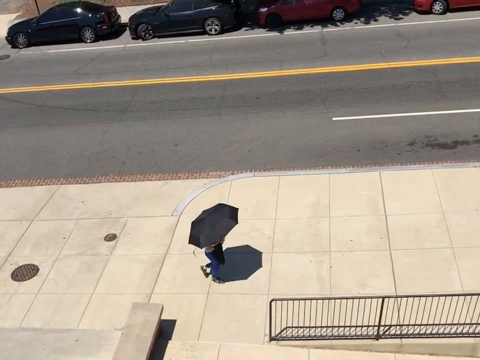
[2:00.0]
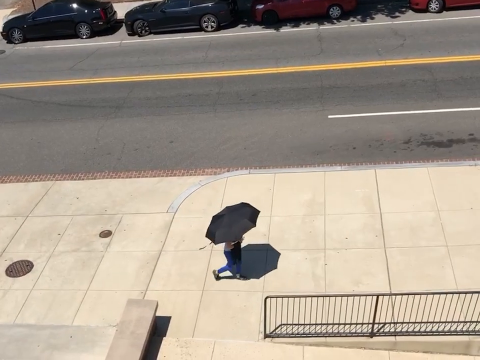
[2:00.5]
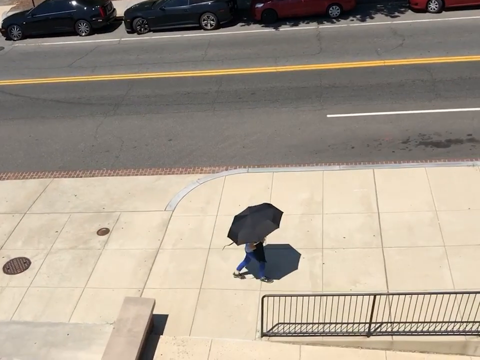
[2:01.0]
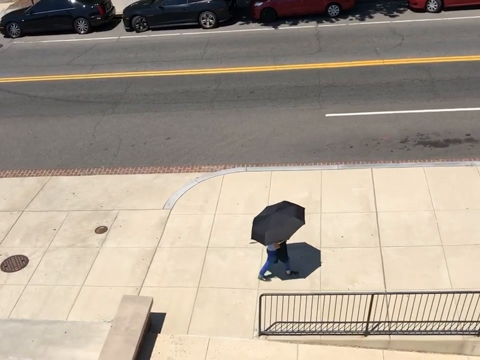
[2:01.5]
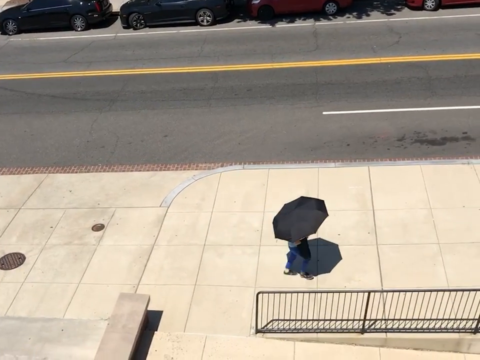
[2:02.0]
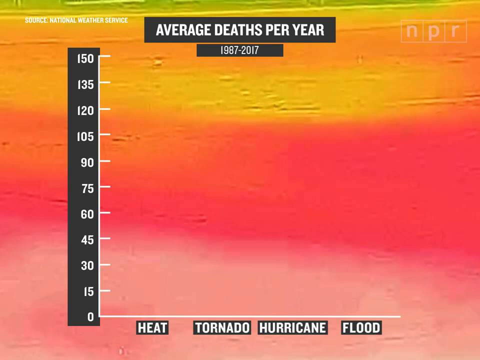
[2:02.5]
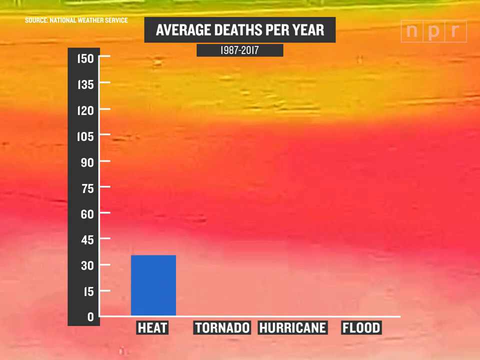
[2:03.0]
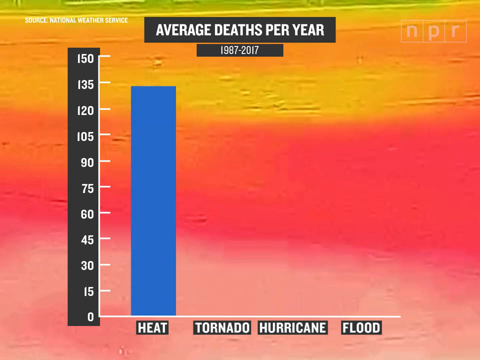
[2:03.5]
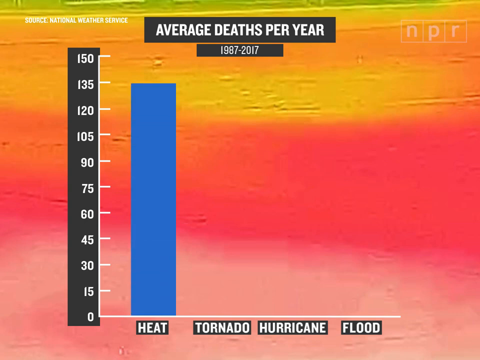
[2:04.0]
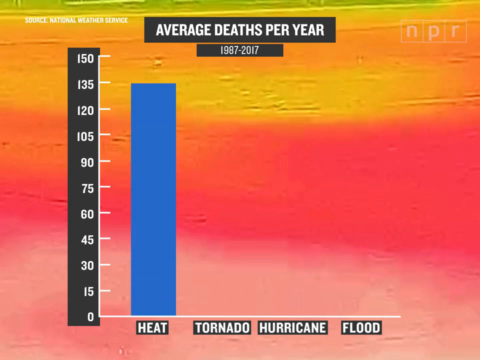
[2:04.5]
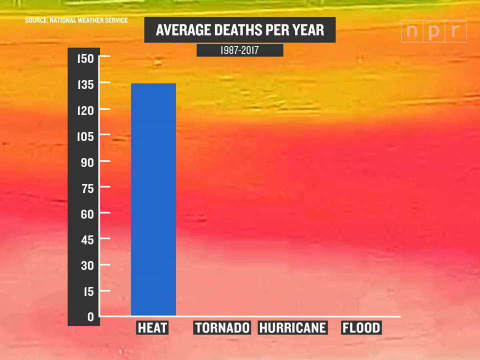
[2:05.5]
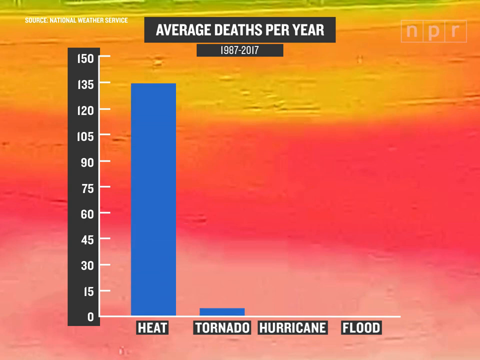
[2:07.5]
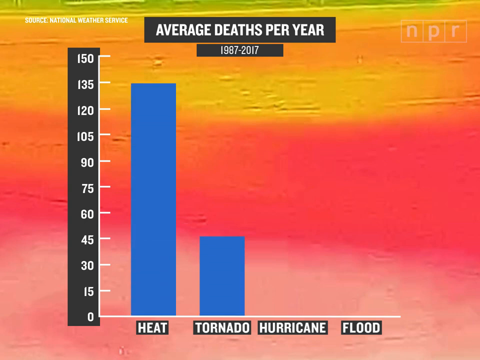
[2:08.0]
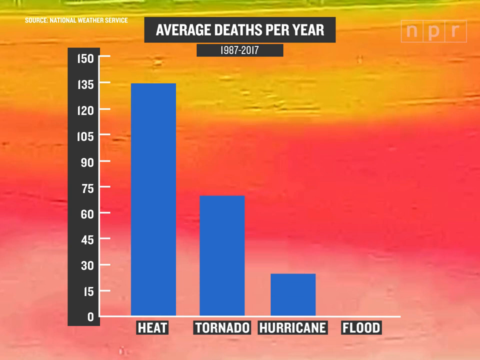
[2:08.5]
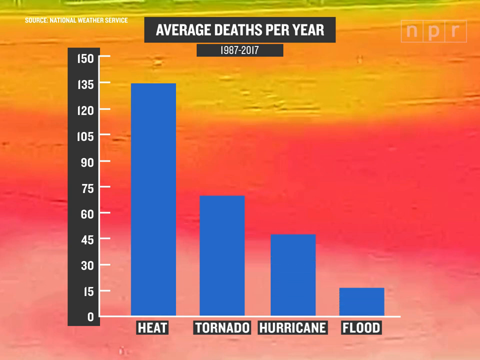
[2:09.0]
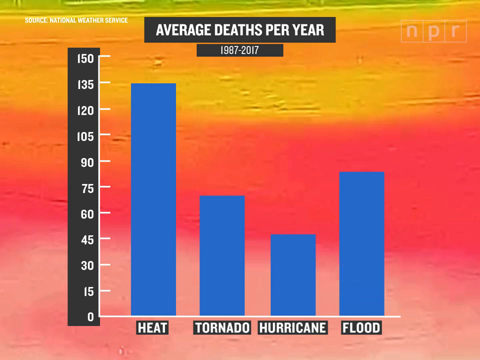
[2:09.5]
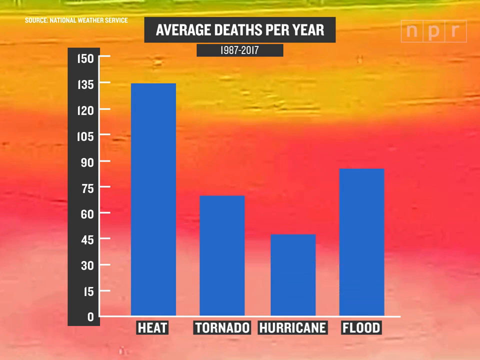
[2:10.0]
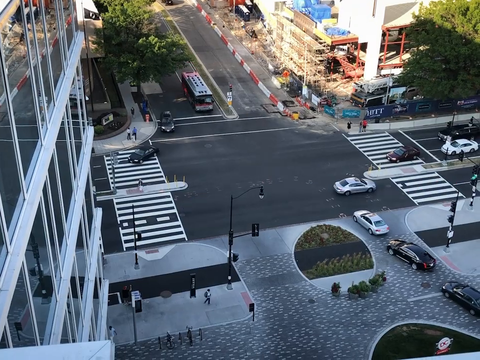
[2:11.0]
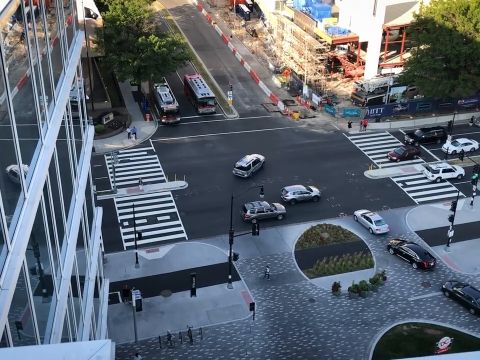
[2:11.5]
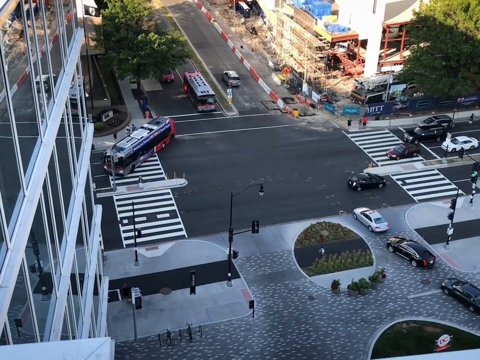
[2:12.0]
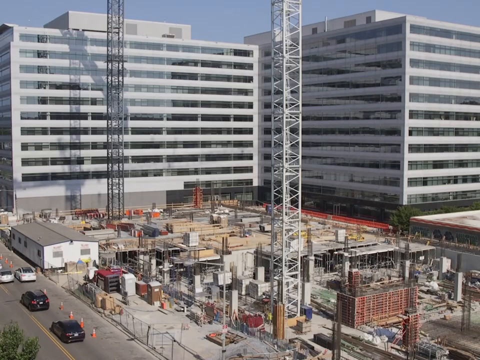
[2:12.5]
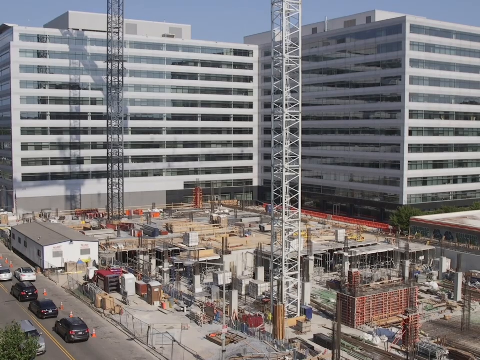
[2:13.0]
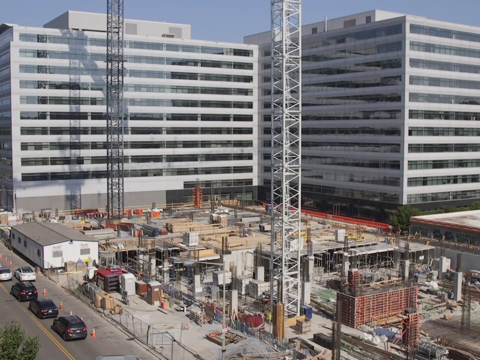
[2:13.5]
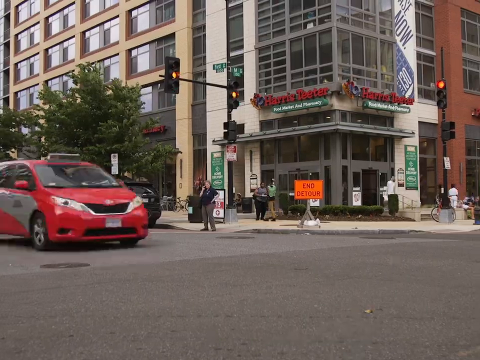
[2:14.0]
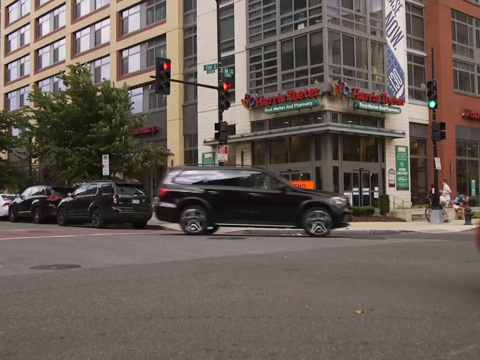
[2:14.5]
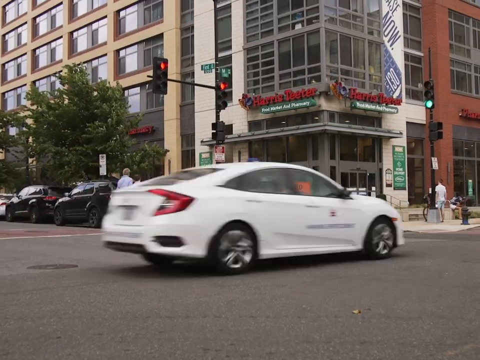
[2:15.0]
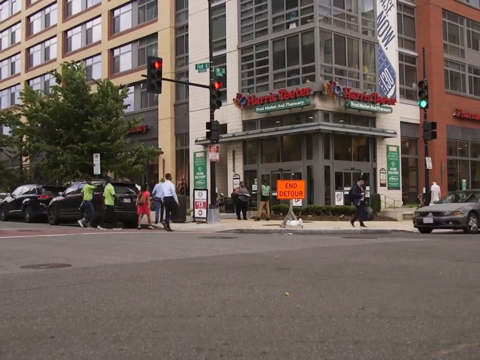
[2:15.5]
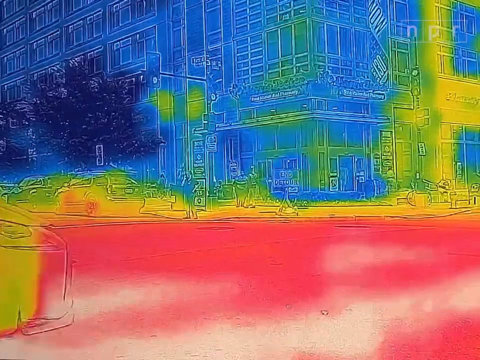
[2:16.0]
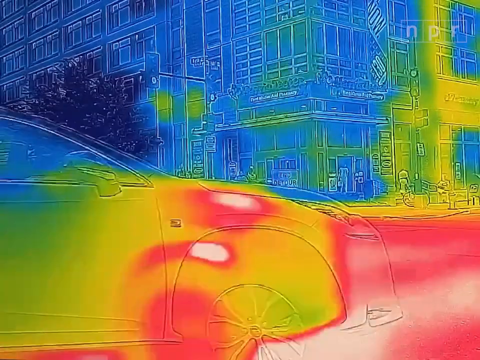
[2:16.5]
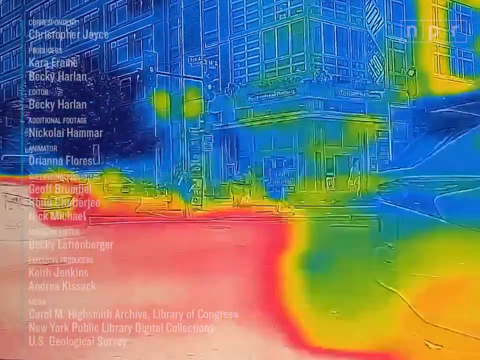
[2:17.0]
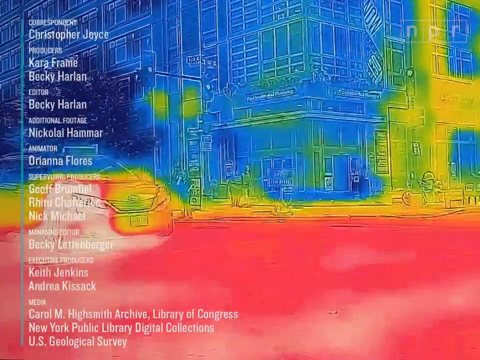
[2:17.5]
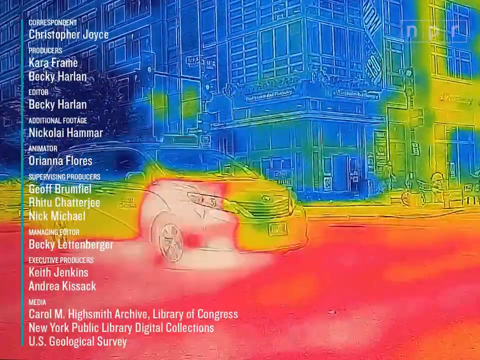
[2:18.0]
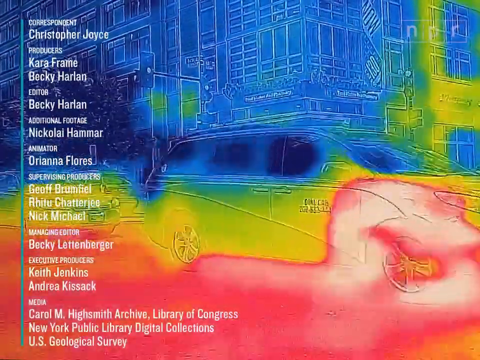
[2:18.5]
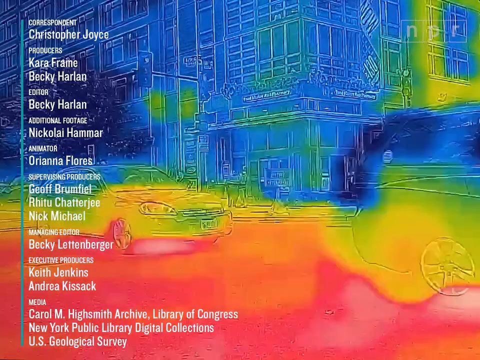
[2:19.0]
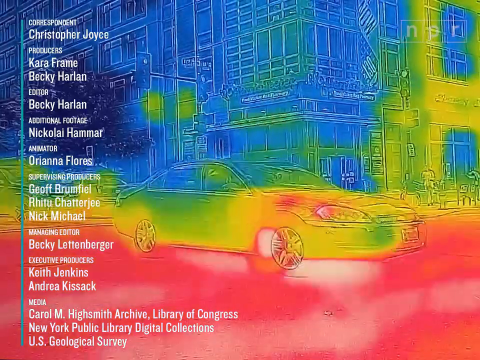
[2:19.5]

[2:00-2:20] A sidewalk and an asphalt road appear, with someone walking on the sidewalk holding a black umbrella, presumably because the sun is so hot. The scene changes to a graph that says "average deaths per year" from 1987 to 2017, listing heat as the primary cause at 135 per year, compared with tornadoes at about 74, hurricanes 45 and floods 80. The scene then changes to a bustling city intersection with a lot of cars crossing, road work in the top right, a few buildings, and small patches of grass and a few trees on the left side. Next come a construction site and another view of the city with the heat map effect on top.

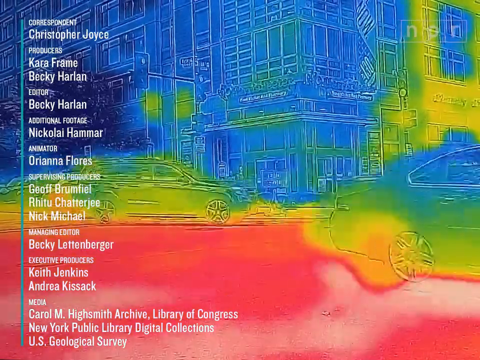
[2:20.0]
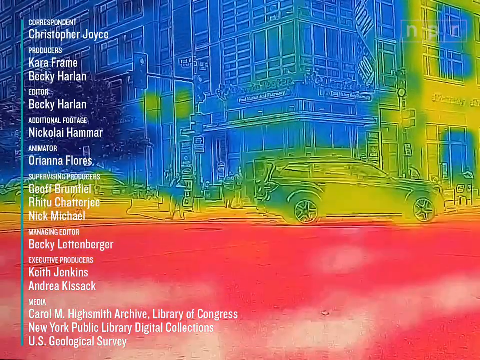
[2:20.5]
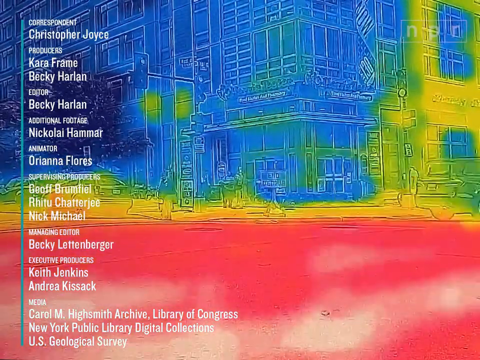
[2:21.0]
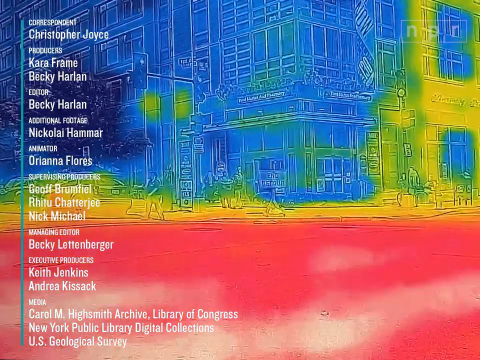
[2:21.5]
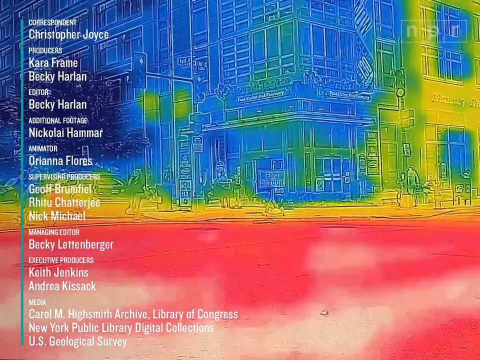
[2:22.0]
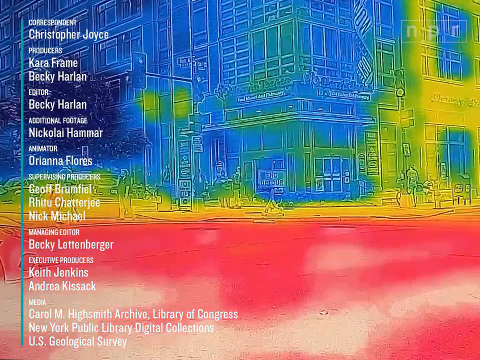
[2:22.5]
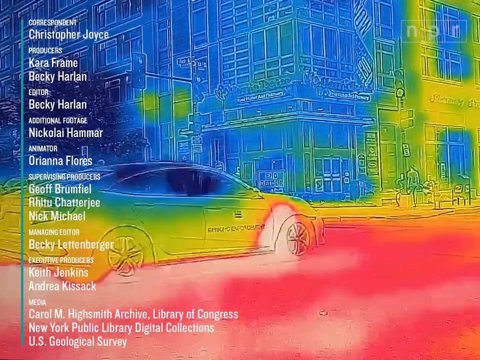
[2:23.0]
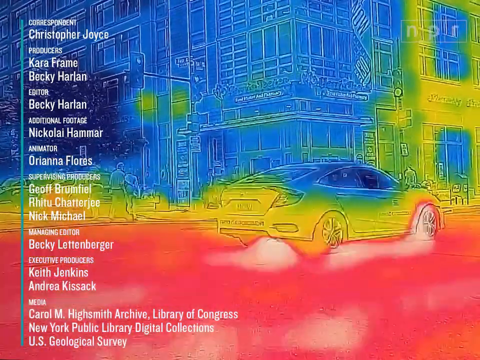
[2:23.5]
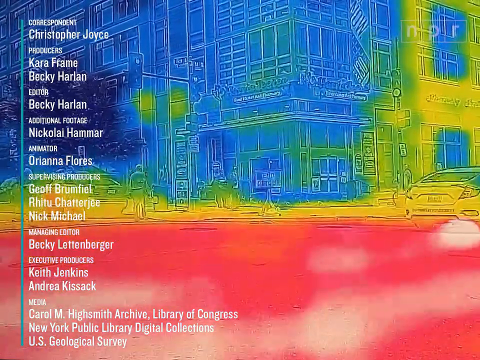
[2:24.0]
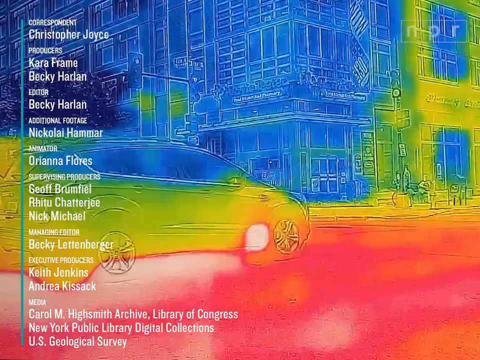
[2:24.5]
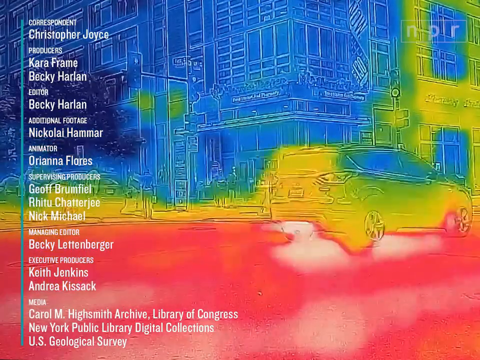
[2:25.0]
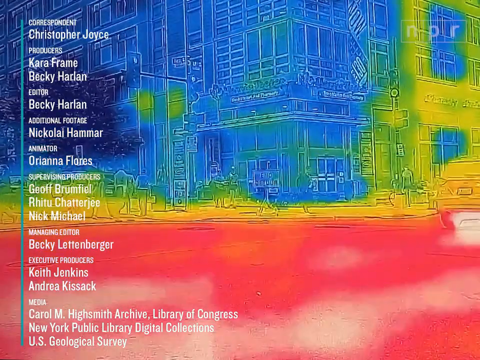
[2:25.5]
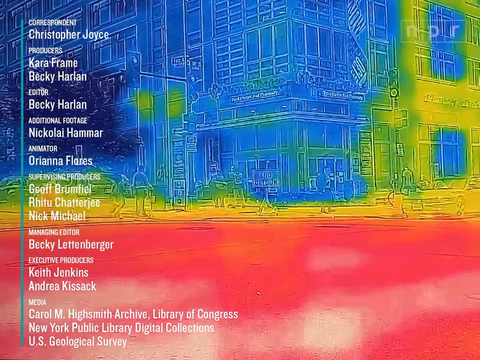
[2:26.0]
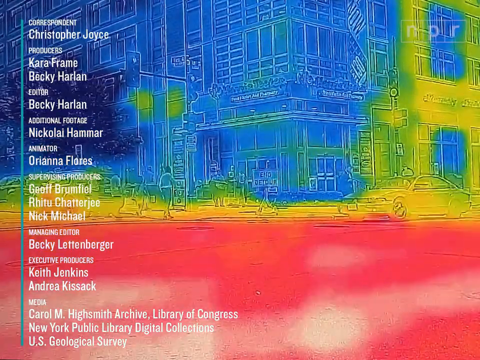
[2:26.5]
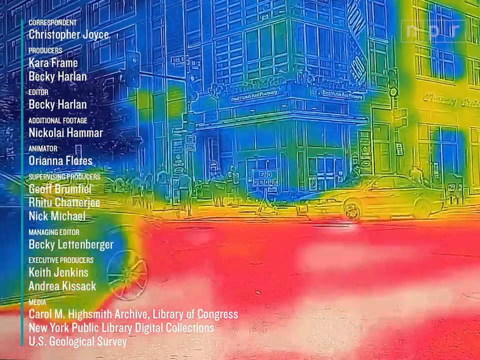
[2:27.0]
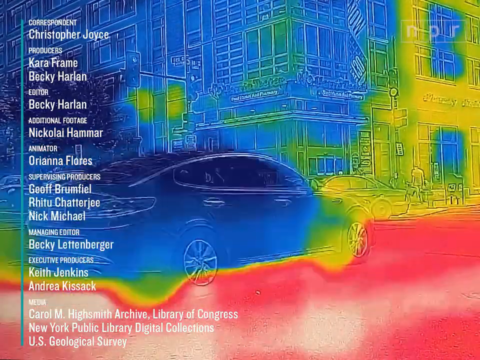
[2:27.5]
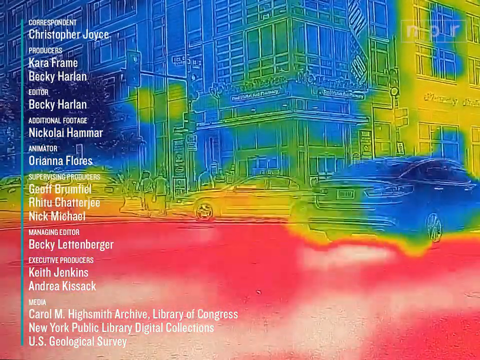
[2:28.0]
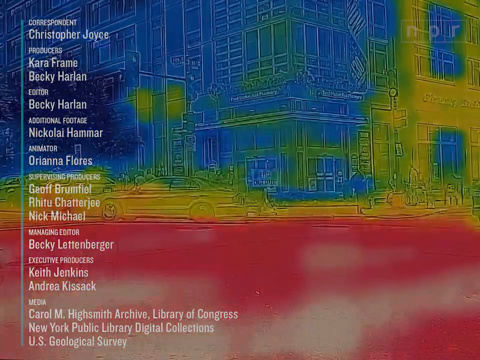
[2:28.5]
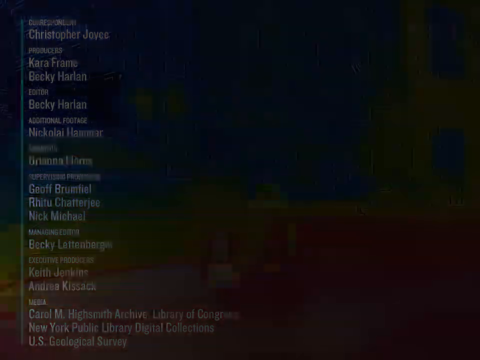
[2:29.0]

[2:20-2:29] The ending shows a ground view of the city center with a building, a stoplight and a few people on the street. The NPR logo is in the top right corner, and on the left names scroll by, apparently the people who produced the video: correspondent Christopher Joyce, producers Kara Frame and Becky Harlan, editor Becky Harlan, and more names for the animators, media providers and managing editor. A few cars pass by with the heat map effect on top of them. The asphalt road appears red, the hottest, while the buildings appear blue, the coolest, implying they hold less heat.